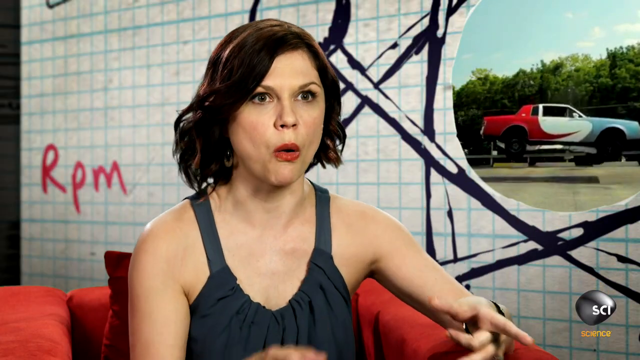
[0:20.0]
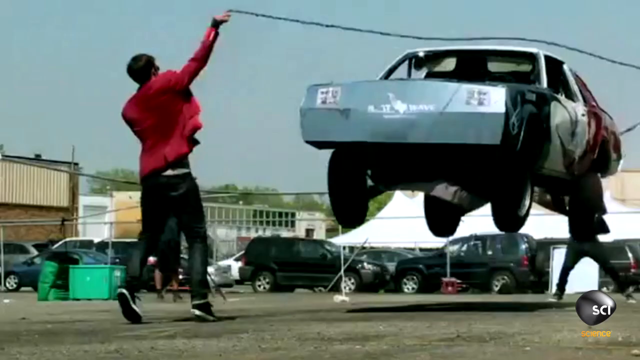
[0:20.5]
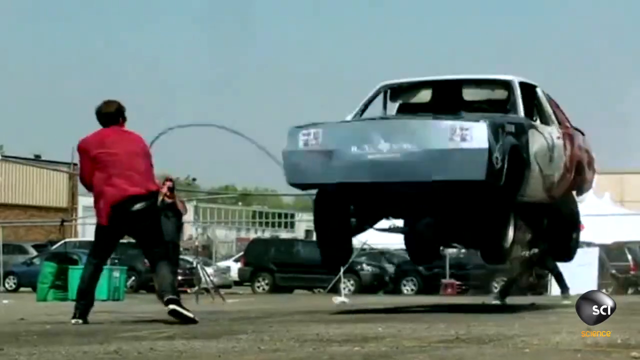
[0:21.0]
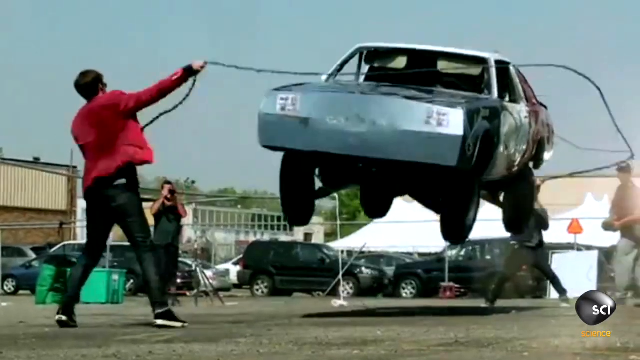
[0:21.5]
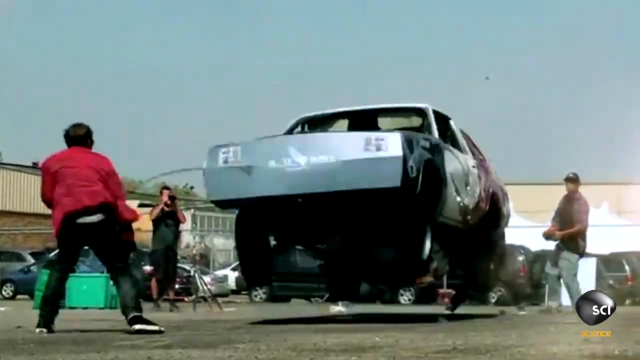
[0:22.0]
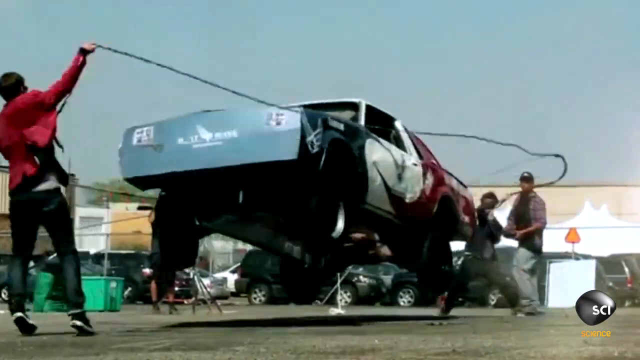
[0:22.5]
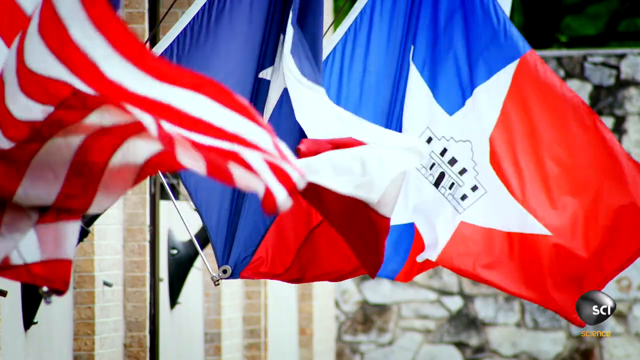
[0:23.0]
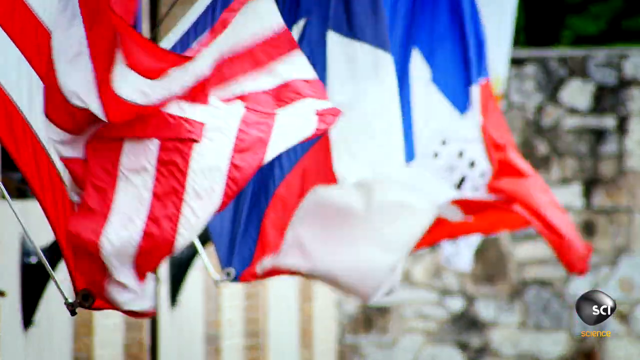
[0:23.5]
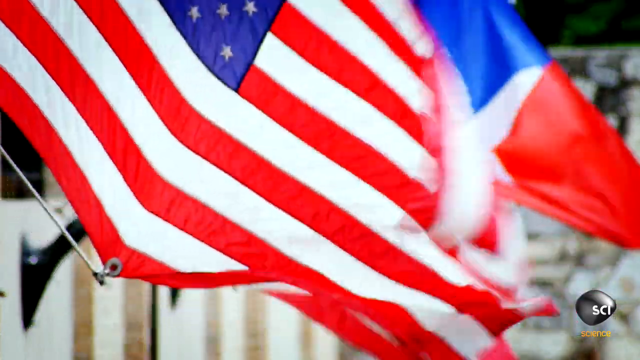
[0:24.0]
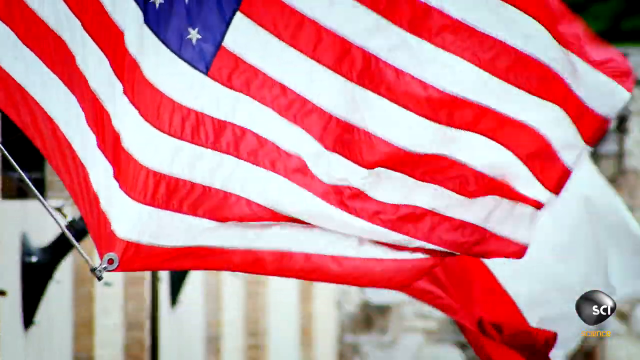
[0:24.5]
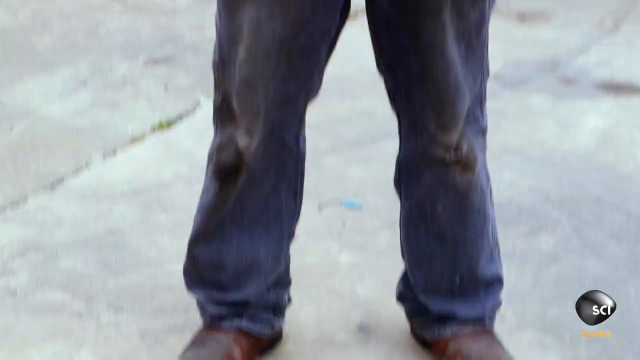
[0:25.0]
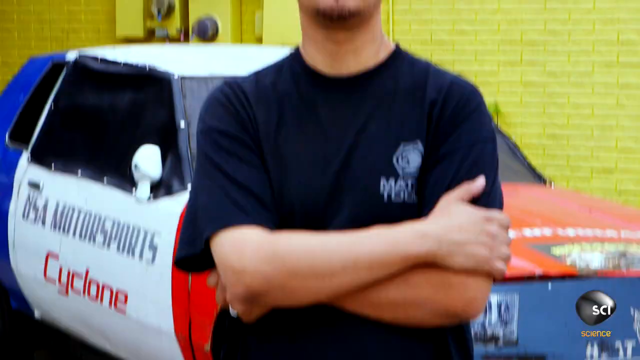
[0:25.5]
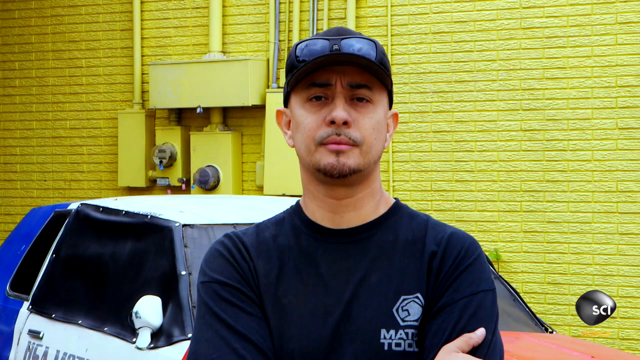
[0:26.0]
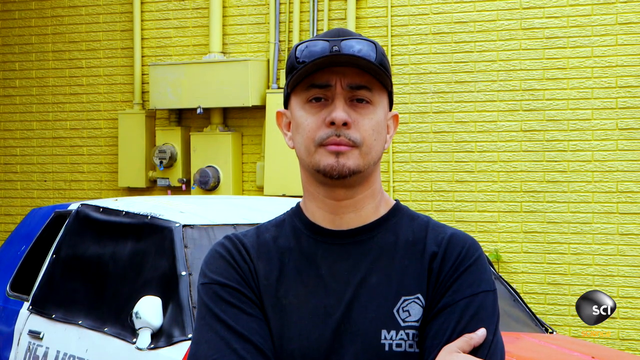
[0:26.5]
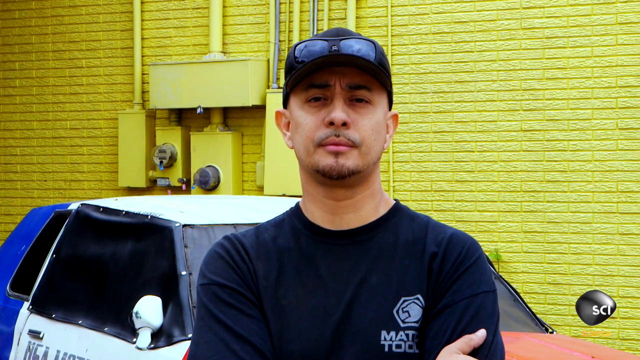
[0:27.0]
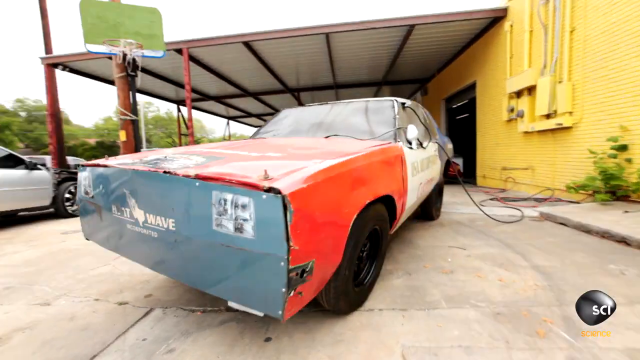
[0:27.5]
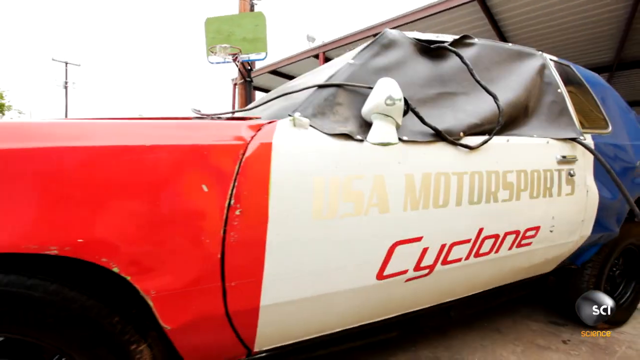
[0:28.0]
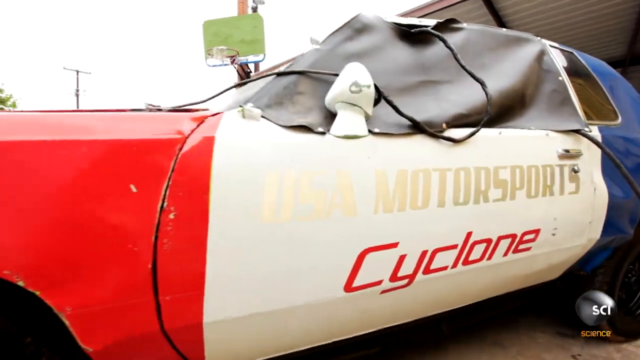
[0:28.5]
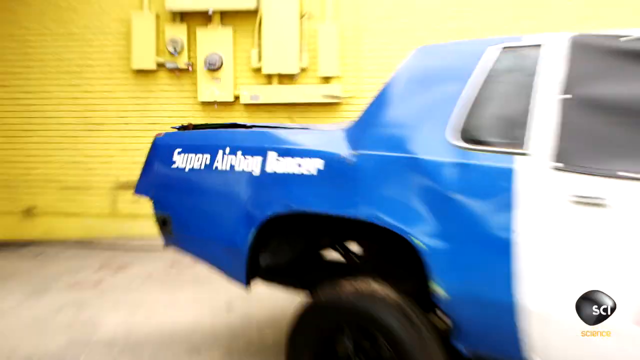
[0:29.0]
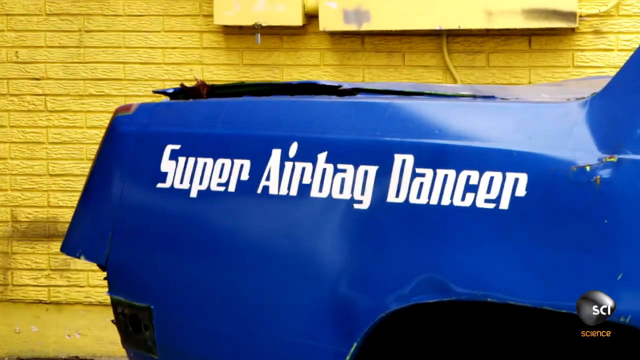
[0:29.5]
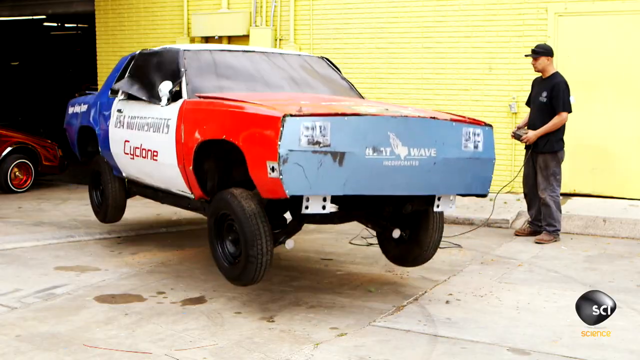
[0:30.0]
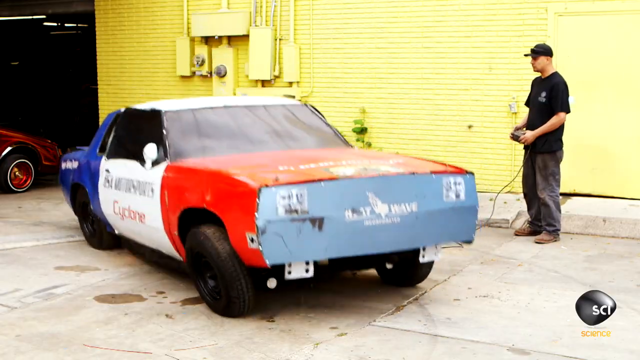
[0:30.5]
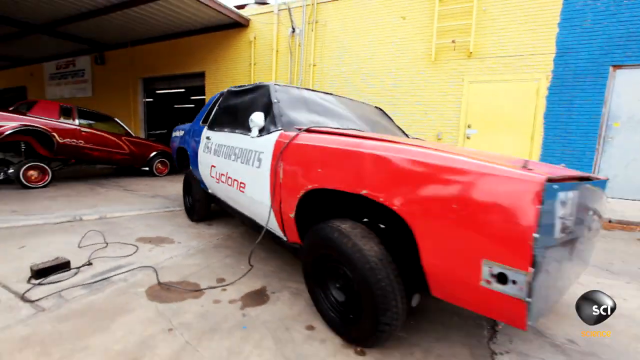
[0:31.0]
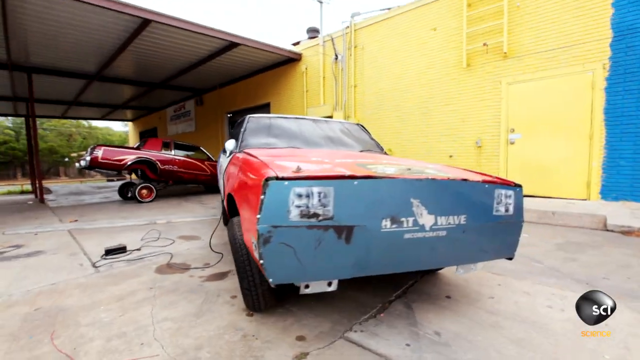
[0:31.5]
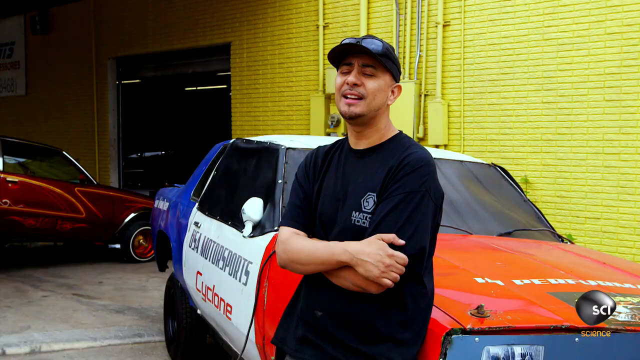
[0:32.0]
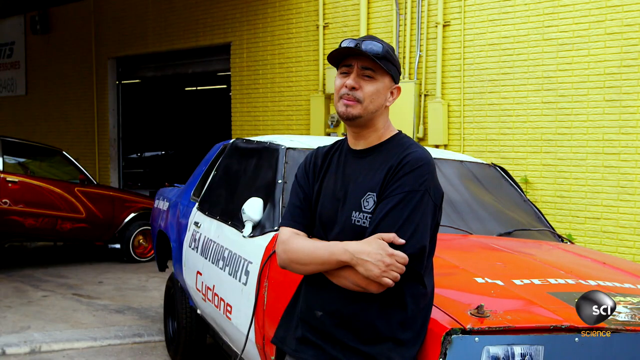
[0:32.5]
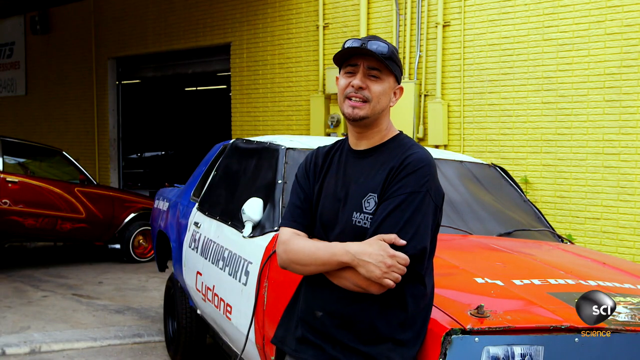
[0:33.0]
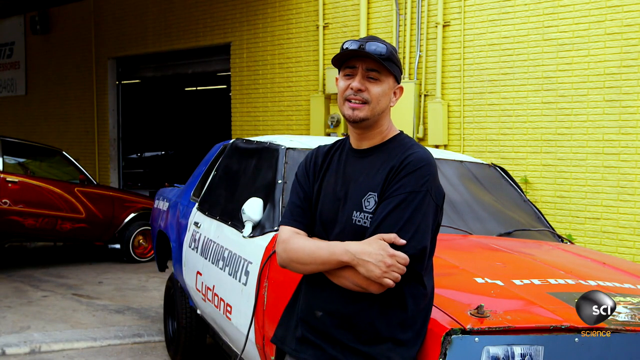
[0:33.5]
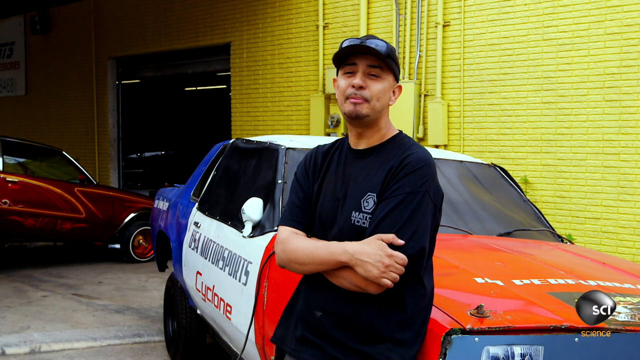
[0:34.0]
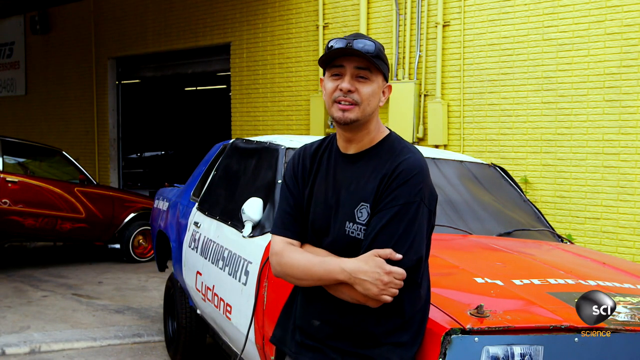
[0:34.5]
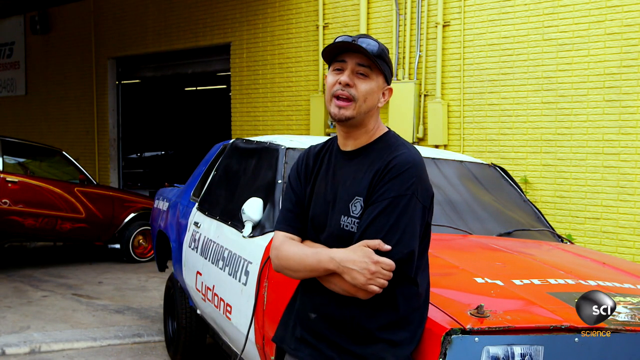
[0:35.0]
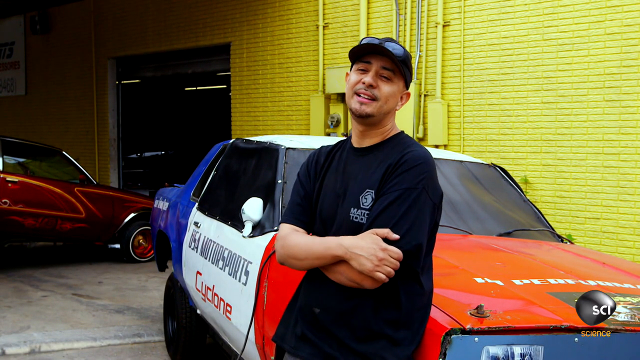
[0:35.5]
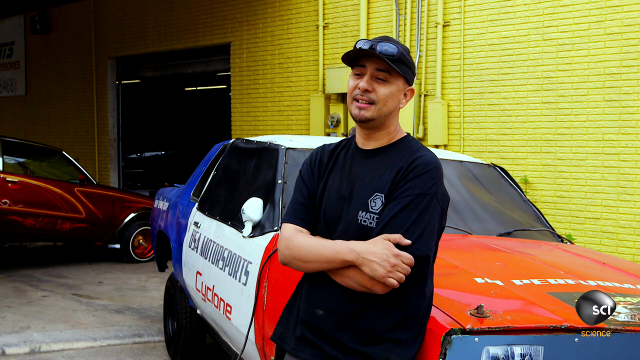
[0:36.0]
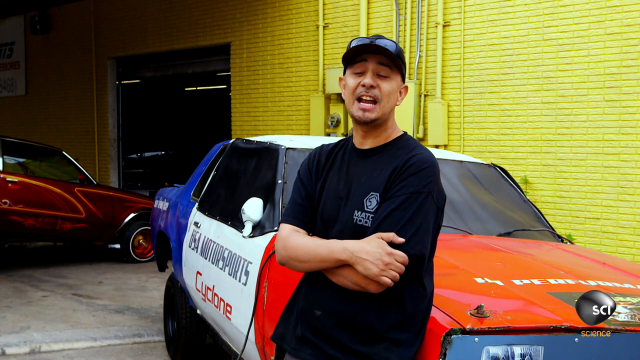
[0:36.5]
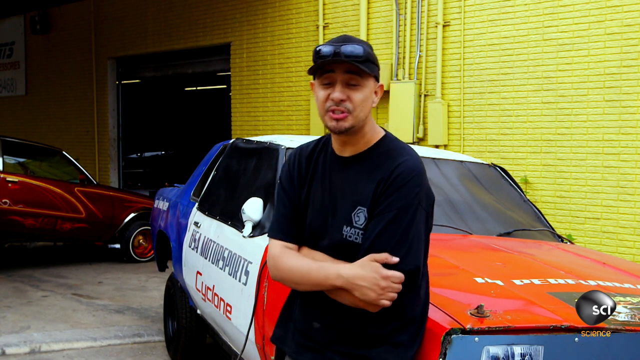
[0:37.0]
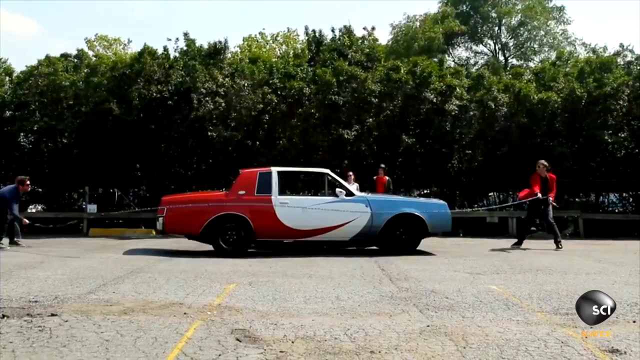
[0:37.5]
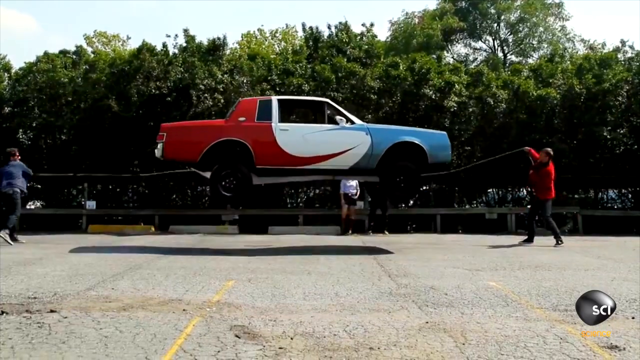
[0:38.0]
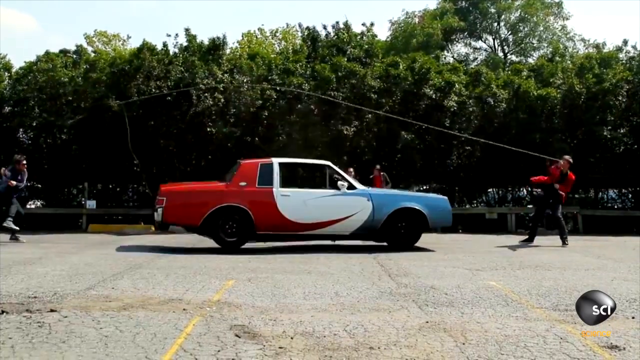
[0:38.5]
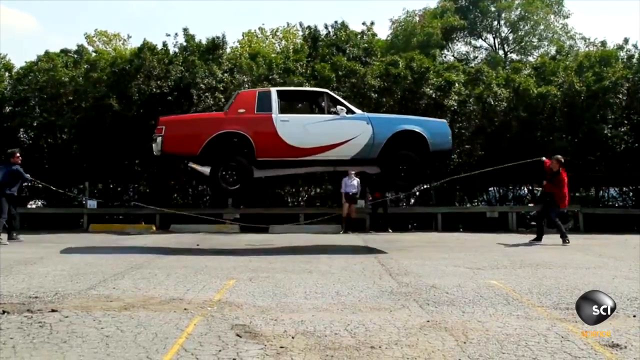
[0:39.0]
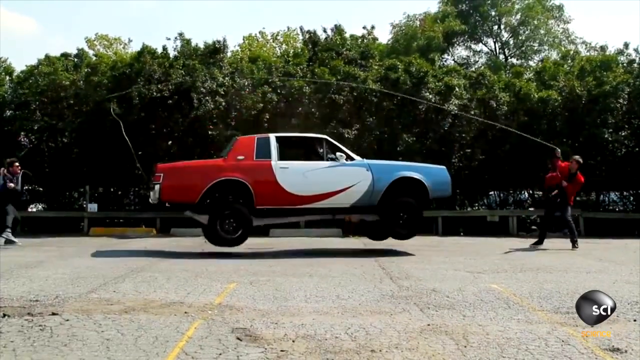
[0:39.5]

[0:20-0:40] The view changes to the front, showing one of the people swinging the rope vigorously and the car bouncing high into the air over the rope, possibly up to a metre high. The scene then moves to a collection of flags, including the American stars and stripes. It cuts to a man in grey jeans, a black t-shirt and a black baseball cap with sunglasses on top of the cap; he is probably in his twenties. He starts talking, presumably about the car. There are pictures of the car itself and of the car bouncing in the air. A hydraulic pipe of some sort is shown connected to an electronics box, which is what is used to control the bouncing of the car. The scene shifts back to the original side-on view of the car bouncing over the rope as the two people swing the skipping rope. The final shot is of the female presenter, who is about to talk.